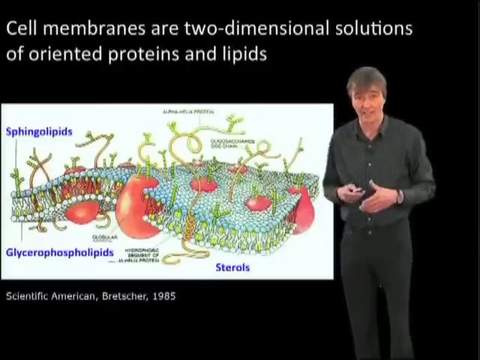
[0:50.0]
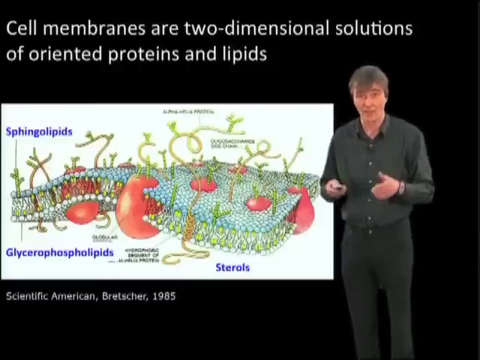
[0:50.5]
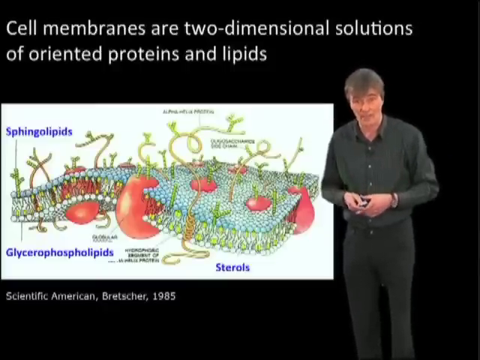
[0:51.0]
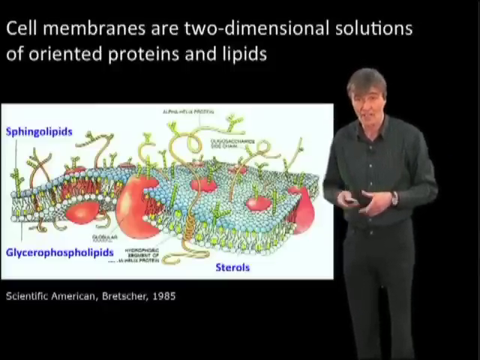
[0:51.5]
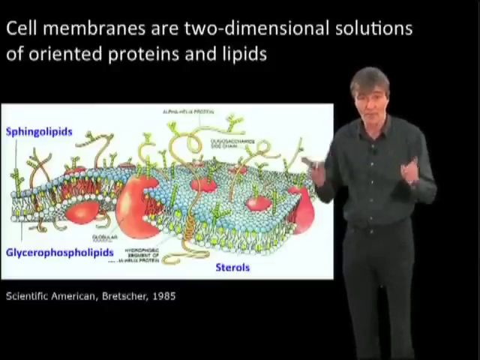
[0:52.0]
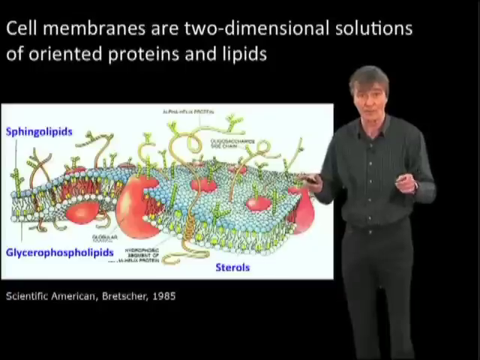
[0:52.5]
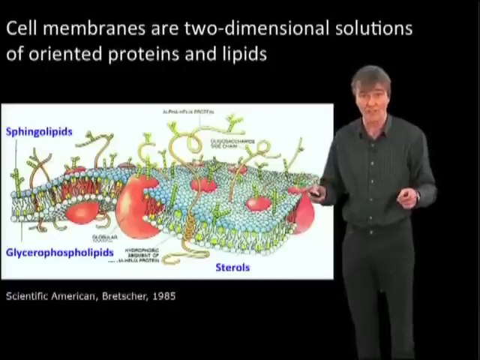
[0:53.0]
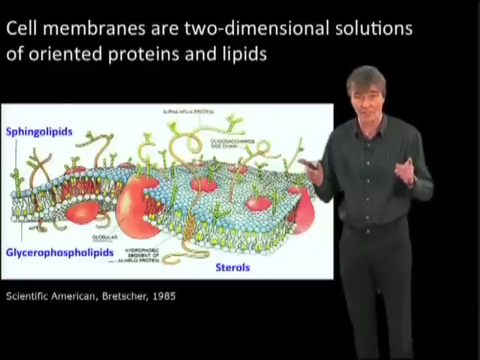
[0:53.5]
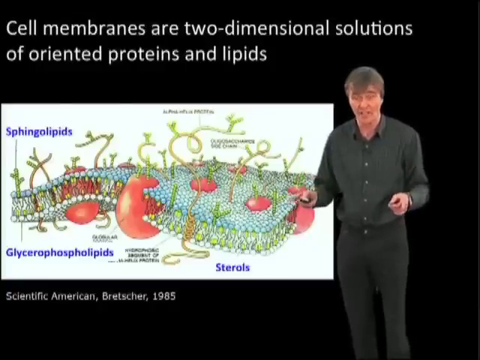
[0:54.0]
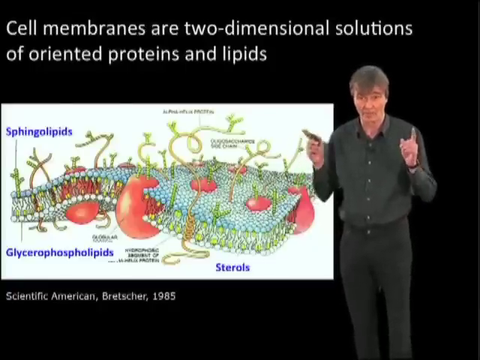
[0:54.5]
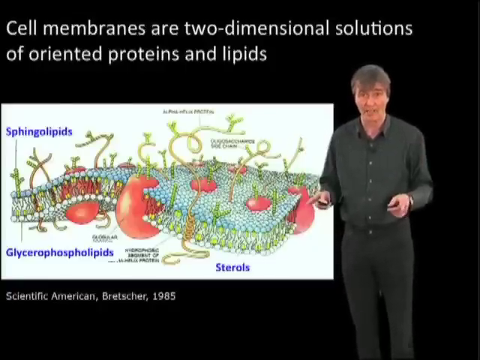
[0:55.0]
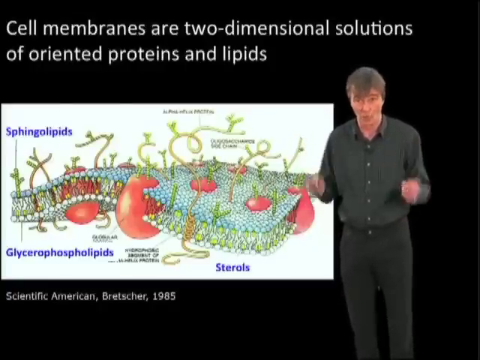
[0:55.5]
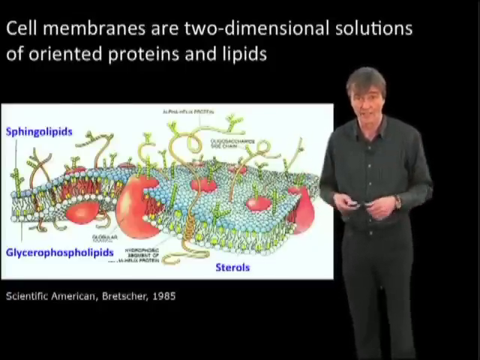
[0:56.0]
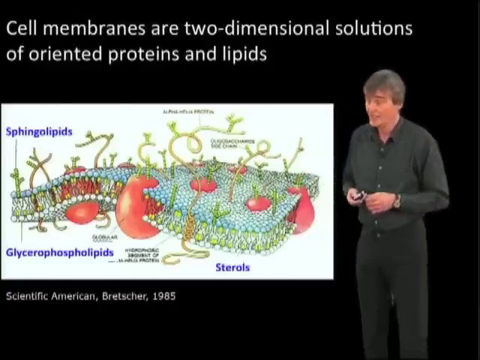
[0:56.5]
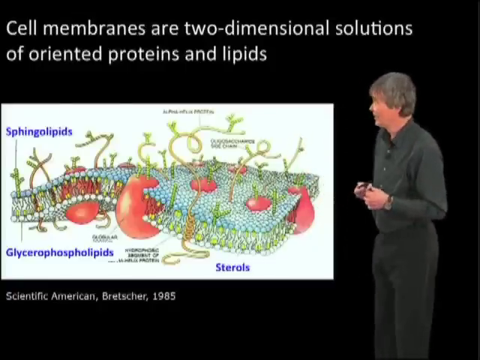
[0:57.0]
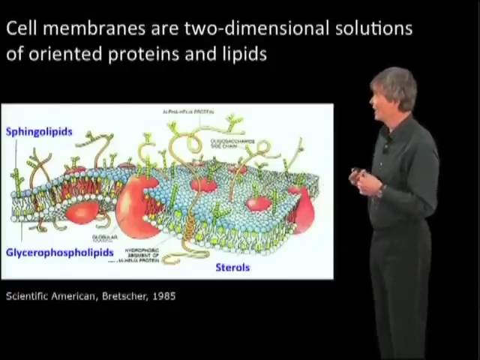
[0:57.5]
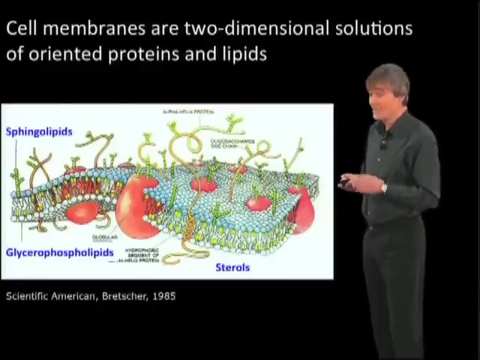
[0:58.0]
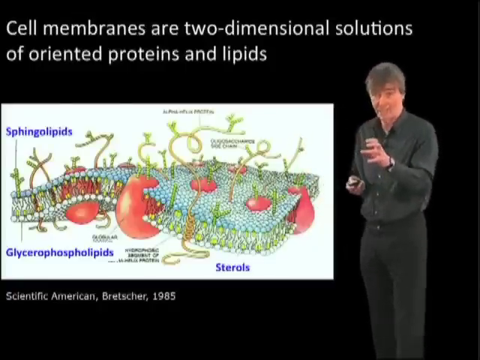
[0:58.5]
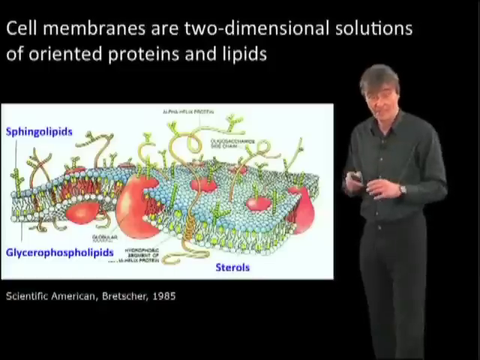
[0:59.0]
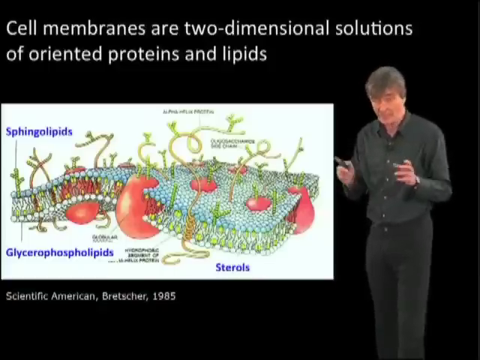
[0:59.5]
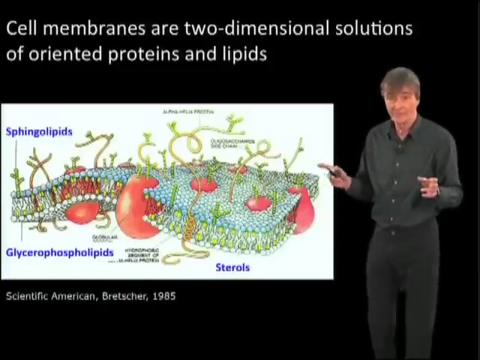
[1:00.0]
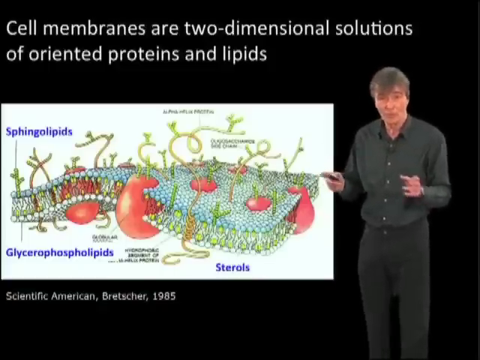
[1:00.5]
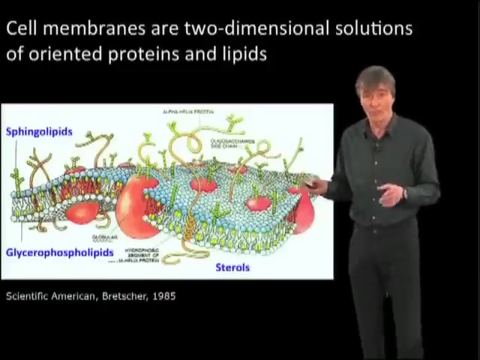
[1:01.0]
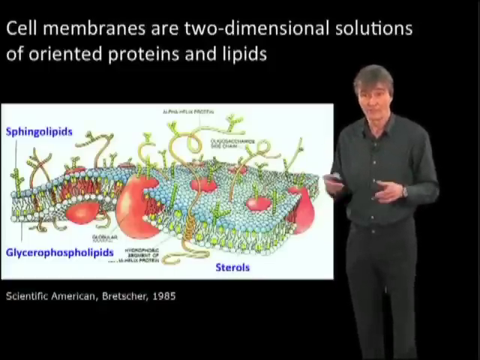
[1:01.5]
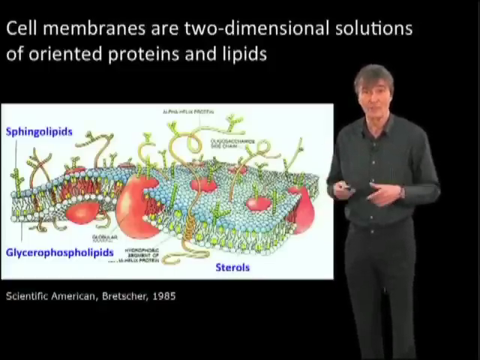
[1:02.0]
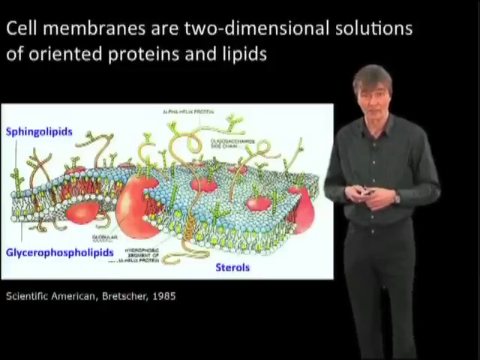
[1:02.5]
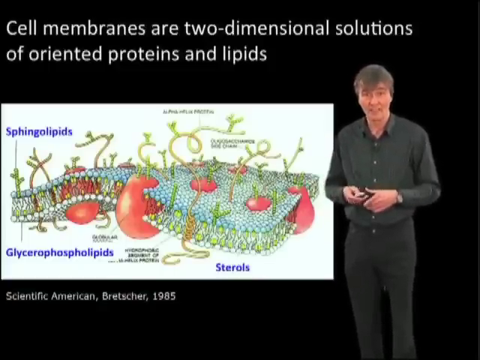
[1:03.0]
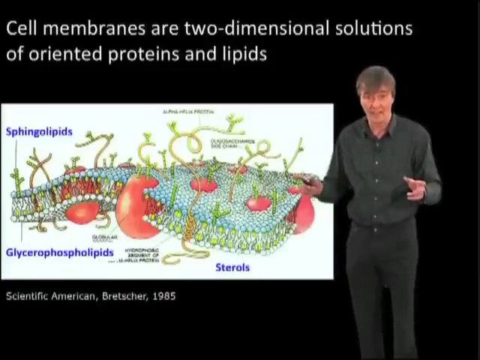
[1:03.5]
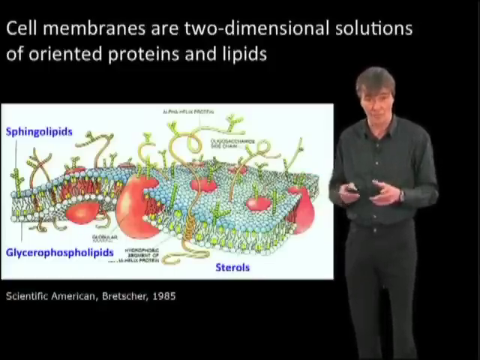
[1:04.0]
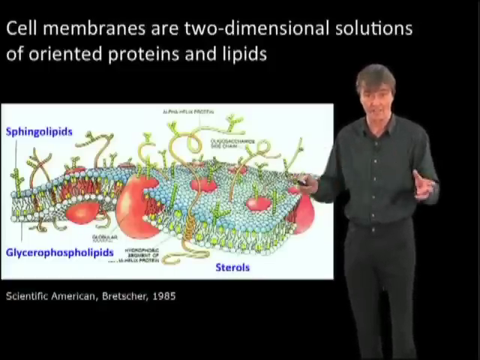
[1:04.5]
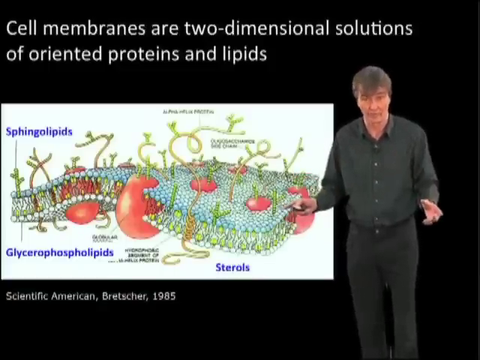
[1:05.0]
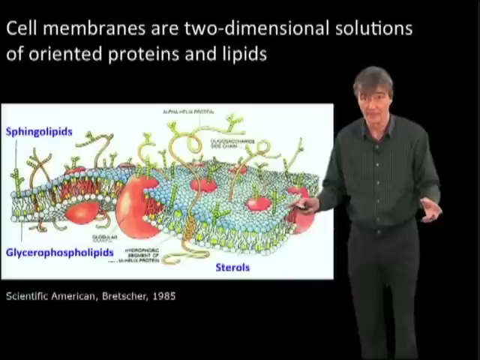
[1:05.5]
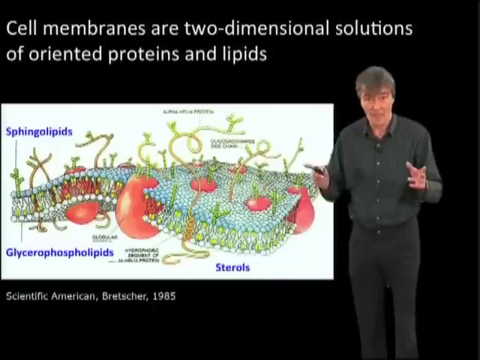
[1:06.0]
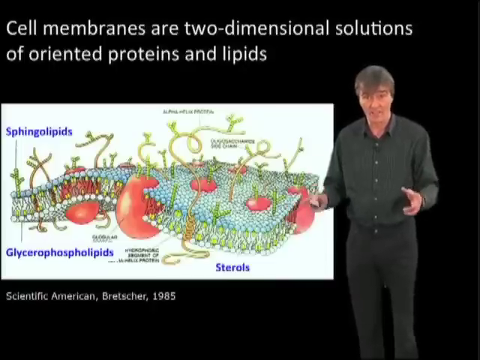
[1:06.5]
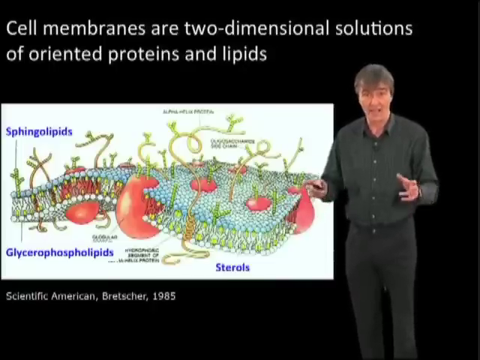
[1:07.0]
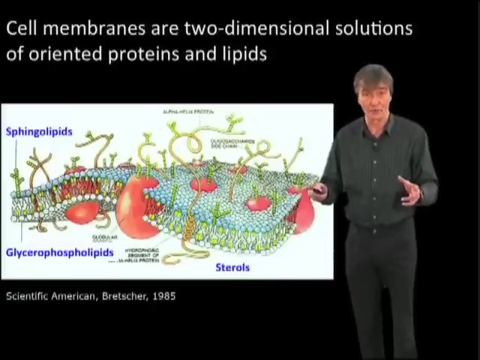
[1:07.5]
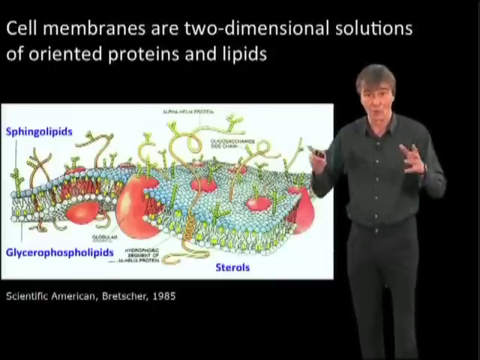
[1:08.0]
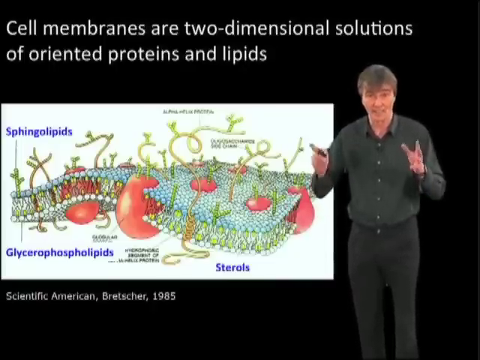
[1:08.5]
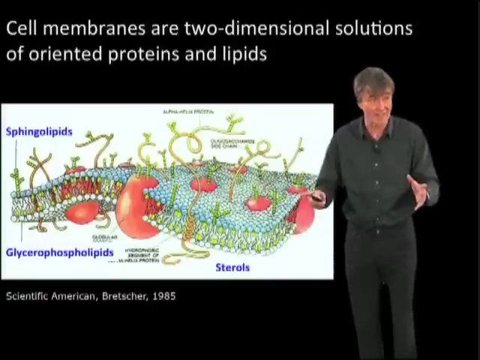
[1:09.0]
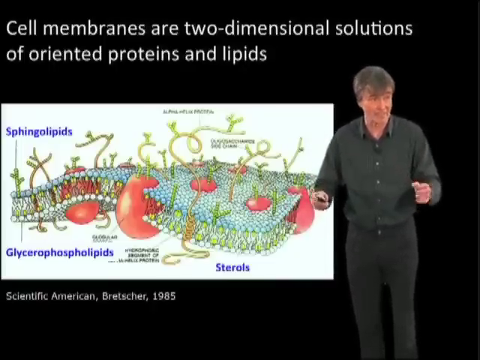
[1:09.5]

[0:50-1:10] The instructor continues with the same diagram, from Scientific American, Bretscher, 1985. He makes many hand gestures, including pointing gestures directed horizontally, as if pointing at the audience, and then looks back at the slide, which has not changed. Blue labels on the slide indicate the main points. He keeps making open gestures with his hands for emphasis.